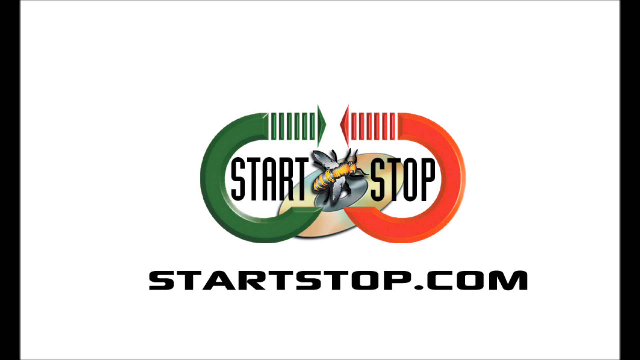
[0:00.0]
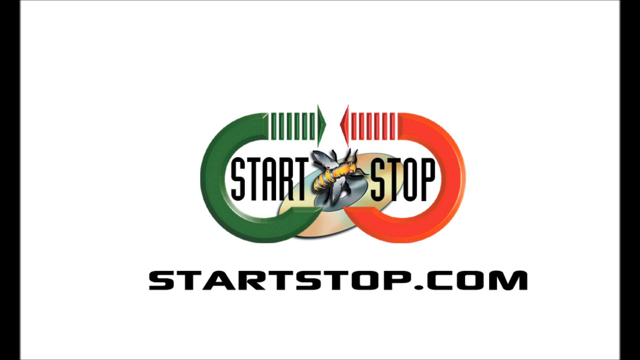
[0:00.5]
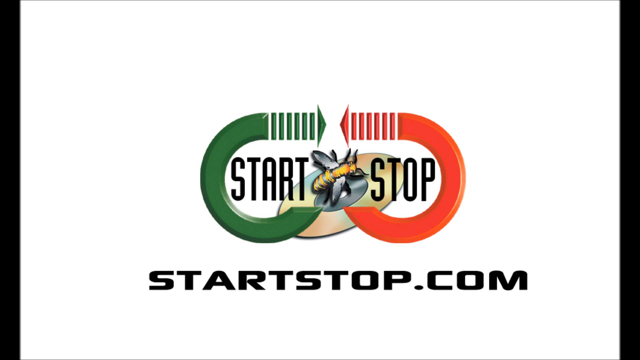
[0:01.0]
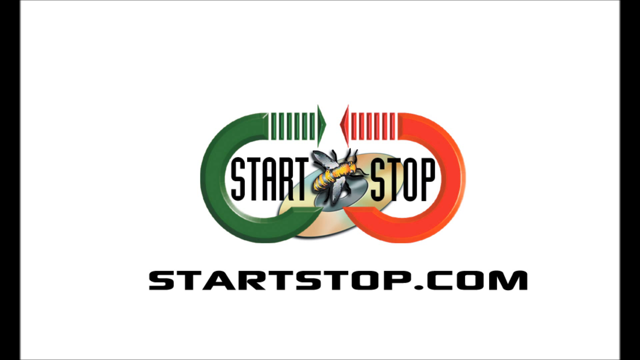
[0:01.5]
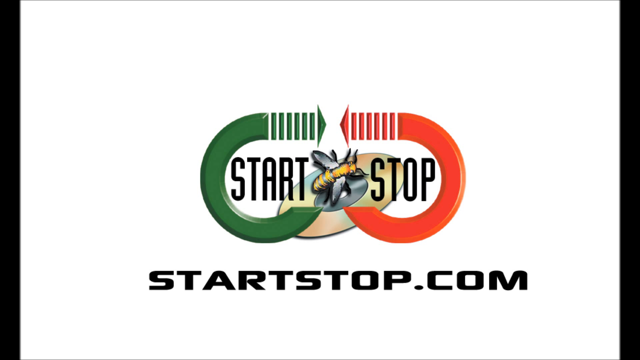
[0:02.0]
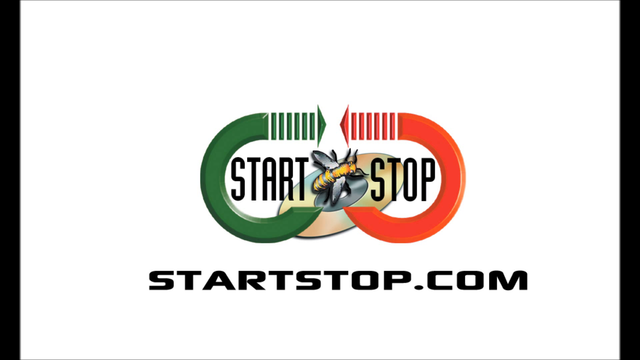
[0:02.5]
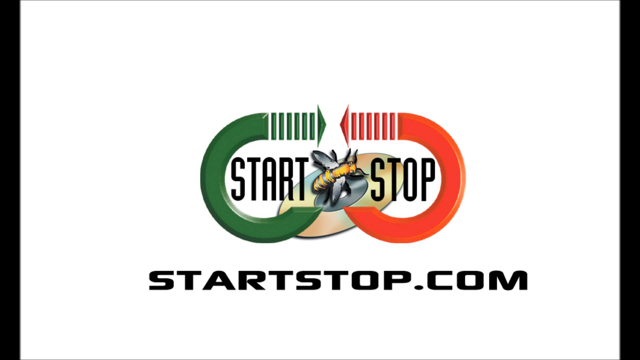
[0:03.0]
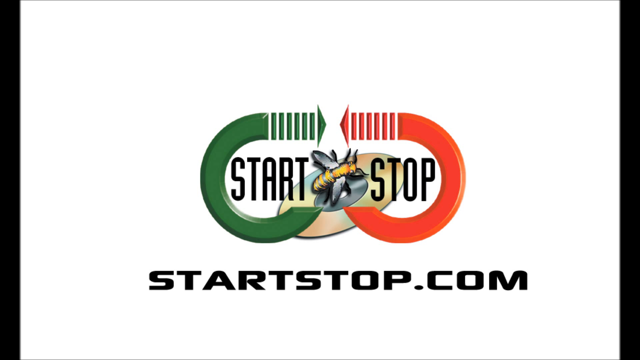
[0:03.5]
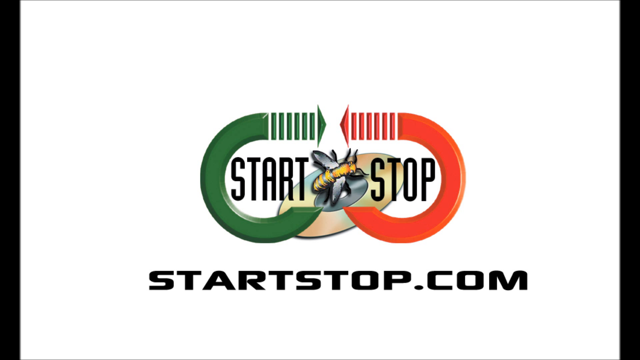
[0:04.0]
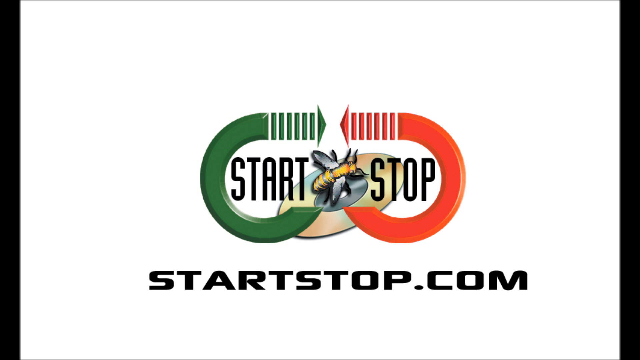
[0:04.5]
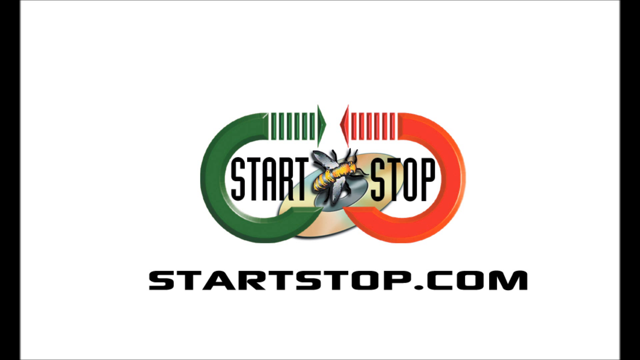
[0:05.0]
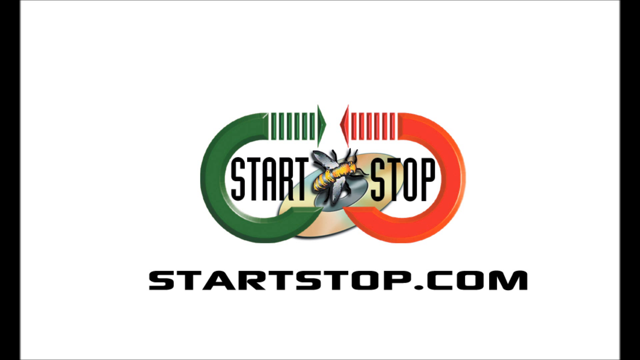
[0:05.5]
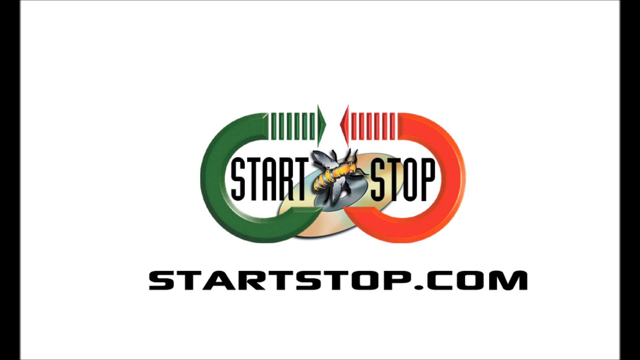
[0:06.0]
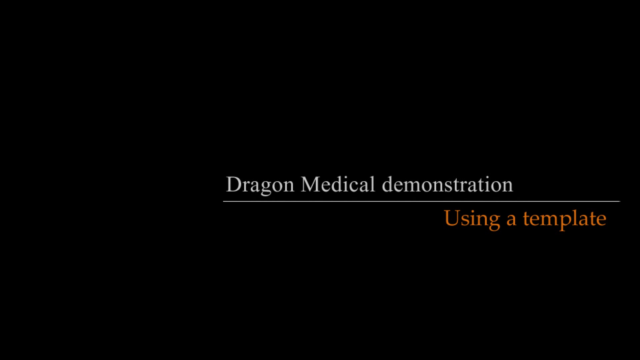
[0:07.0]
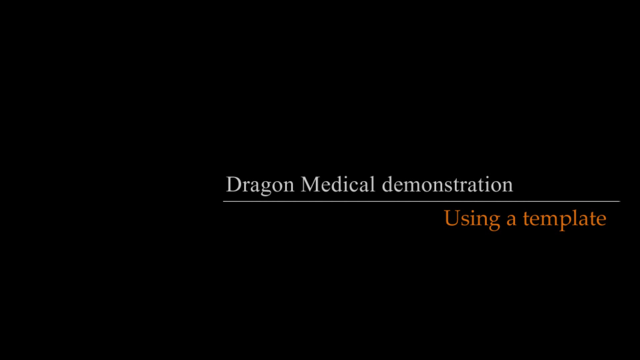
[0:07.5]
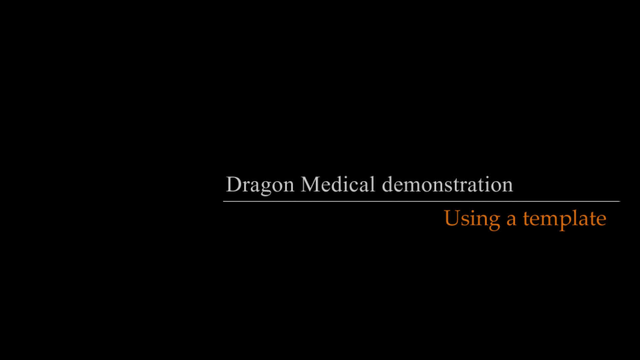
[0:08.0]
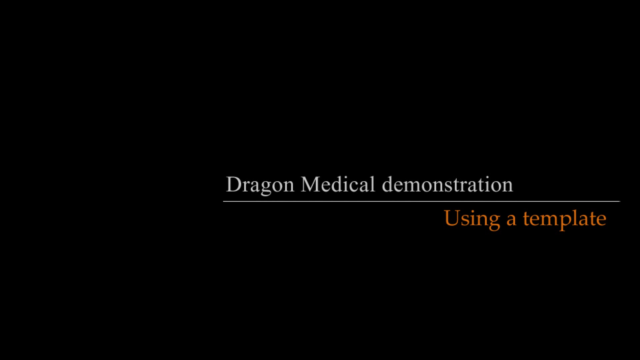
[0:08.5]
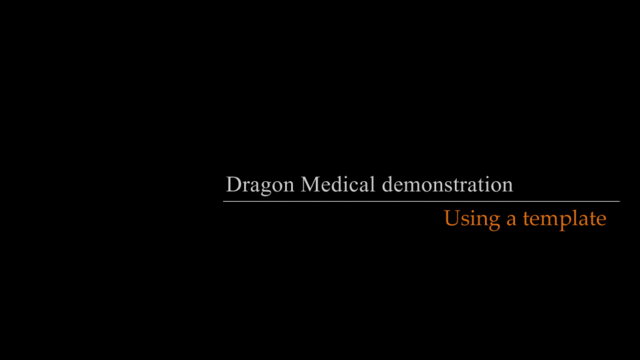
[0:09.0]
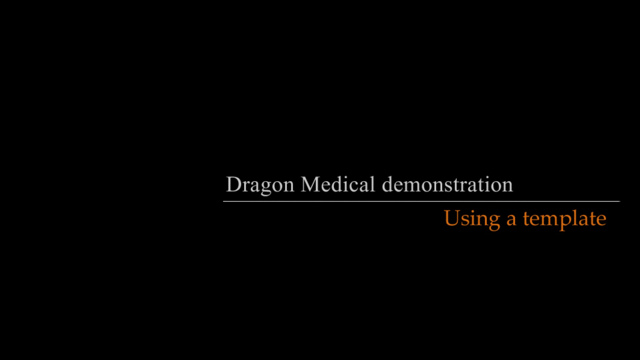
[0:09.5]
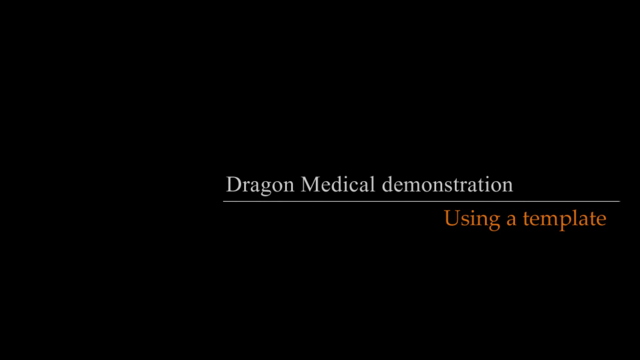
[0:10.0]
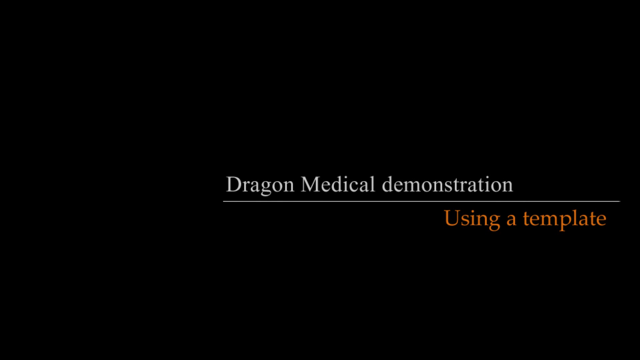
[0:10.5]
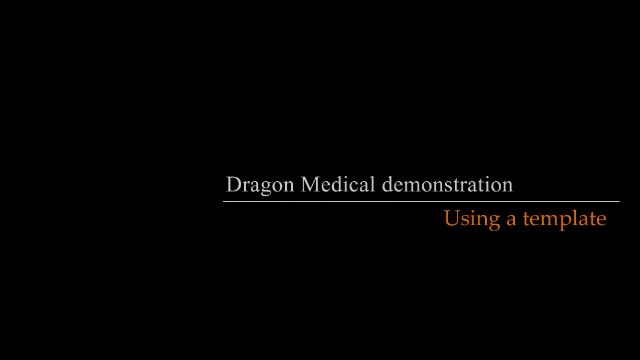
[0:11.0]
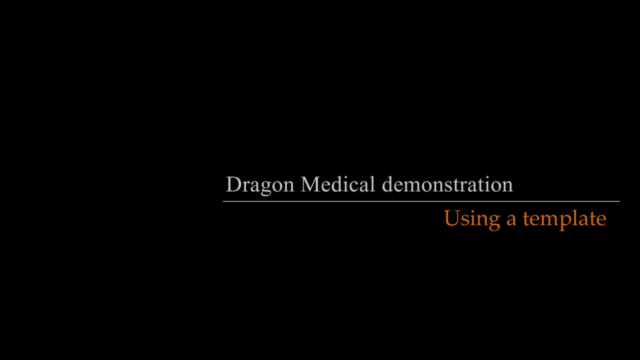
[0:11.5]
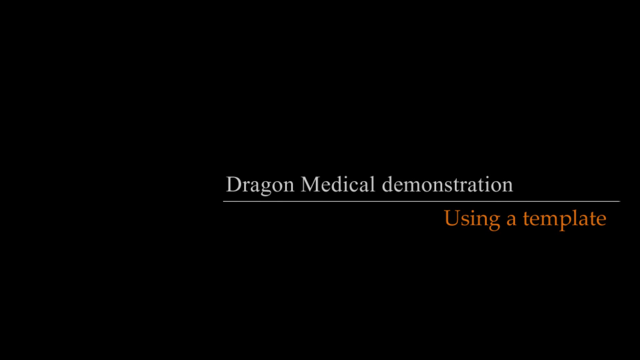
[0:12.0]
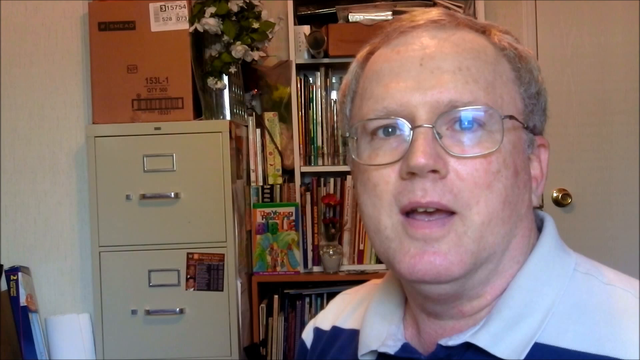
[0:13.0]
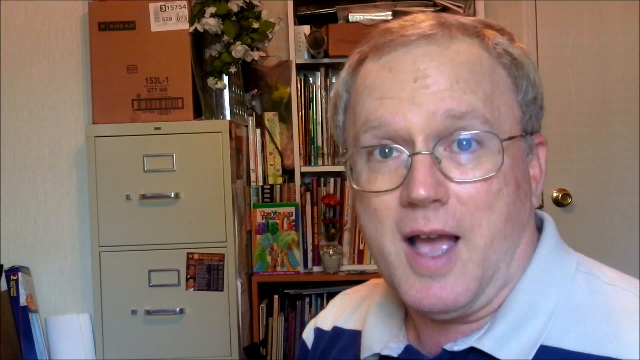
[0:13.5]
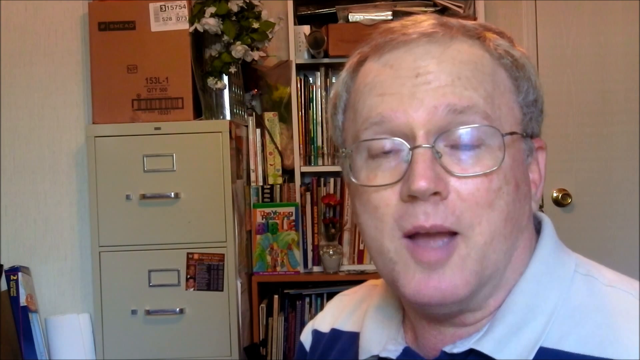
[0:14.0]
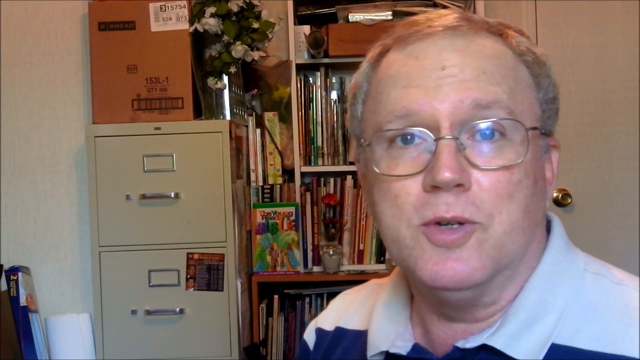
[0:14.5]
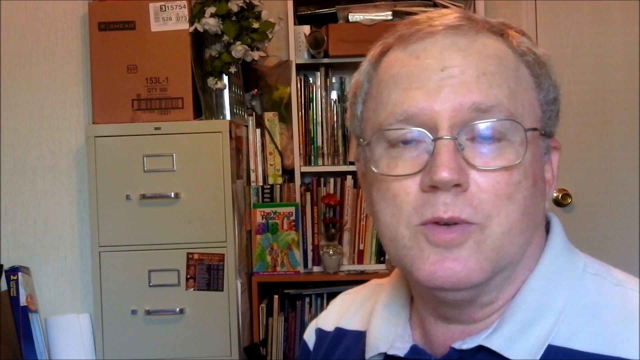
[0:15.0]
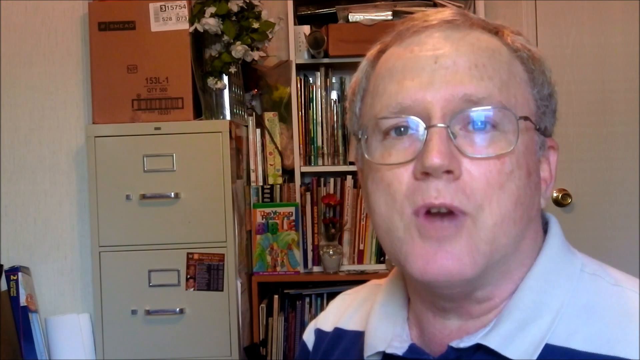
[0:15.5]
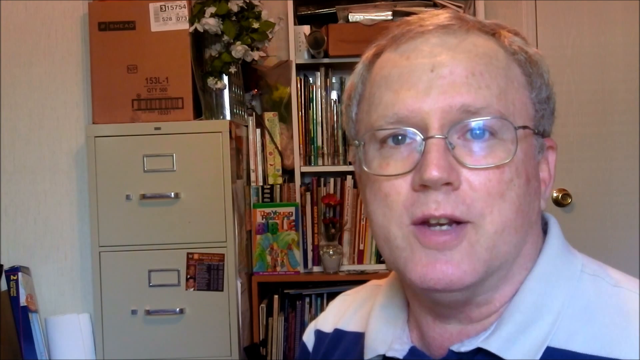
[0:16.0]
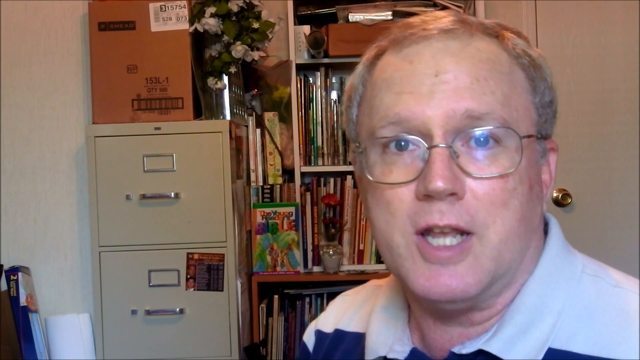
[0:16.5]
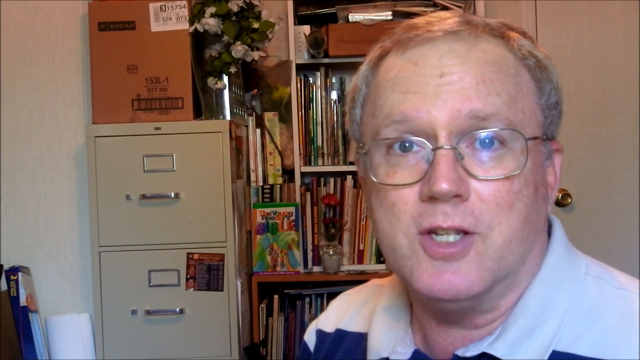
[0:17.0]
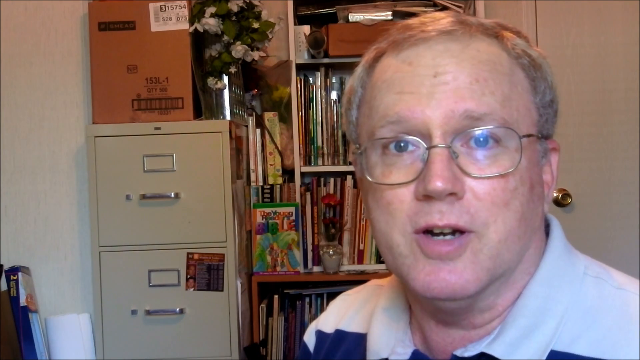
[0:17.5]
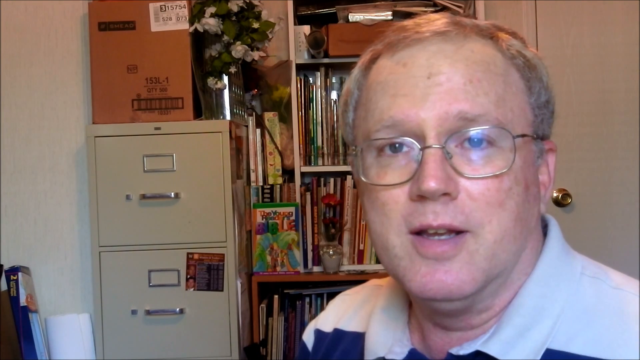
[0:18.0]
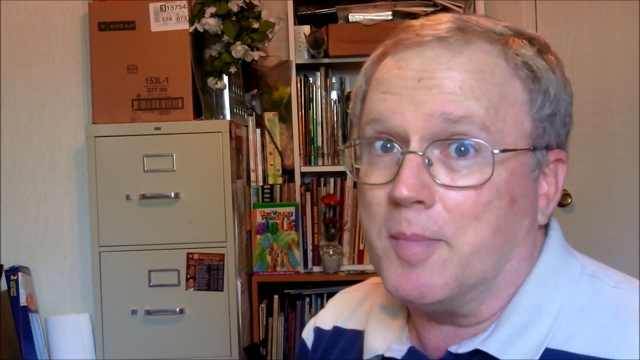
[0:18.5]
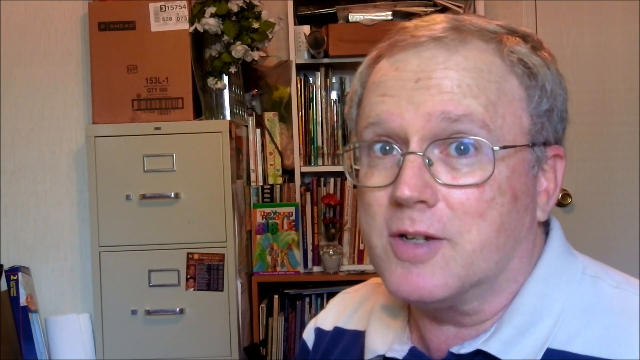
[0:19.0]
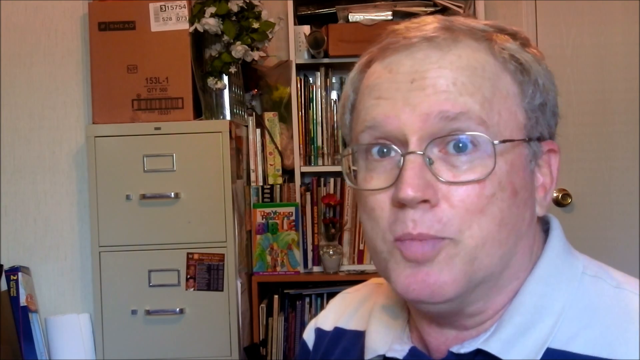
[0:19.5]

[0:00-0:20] The video opens on a logo in the center of a white screen. At the center of the logo is a bee sitting on what looks like a CD. The logo consists of the name Start Stop, with the word Start to the left of the bee and the word Stop to the right of it. Two semicircles surround Start and Stop: a green semicircle on the left and a red semicircle on the right. Below this, in bold black text, is "startstop.com". This fades to a black screen, and text appears near the center reading "Dragon Medical demonstration" in white, with "Using a template" in orange underneath. That screen fades to a man who appears to be in his 60s, seated in the right portion of the screen and speaking directly into the camera at the viewer. He emphasizes his first words by nodding his head up and down. He wears wire-rimmed glasses, and behind him is a messy bookshelf with a file cabinet. He raises his eyebrows slightly as he talks and turns his head slightly toward the center of the frame, opening his eyes wider for emphasis.